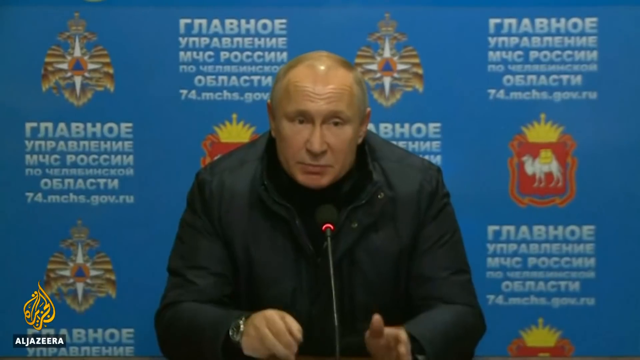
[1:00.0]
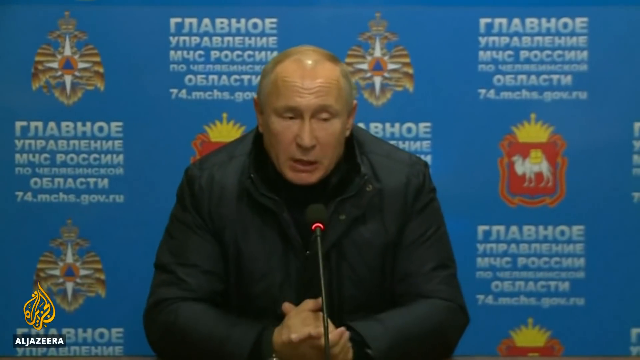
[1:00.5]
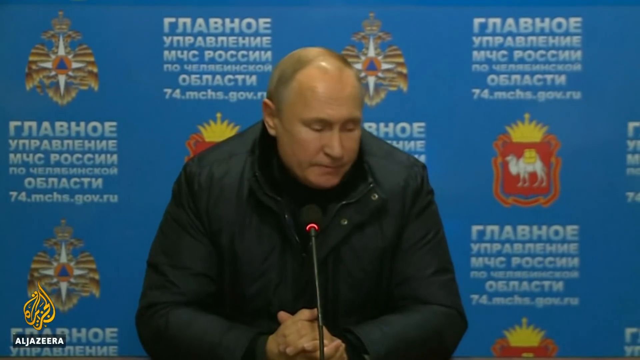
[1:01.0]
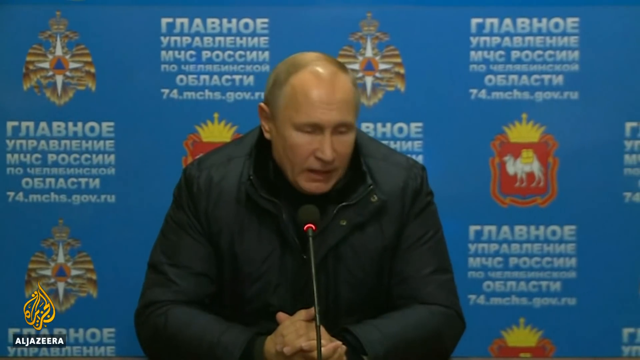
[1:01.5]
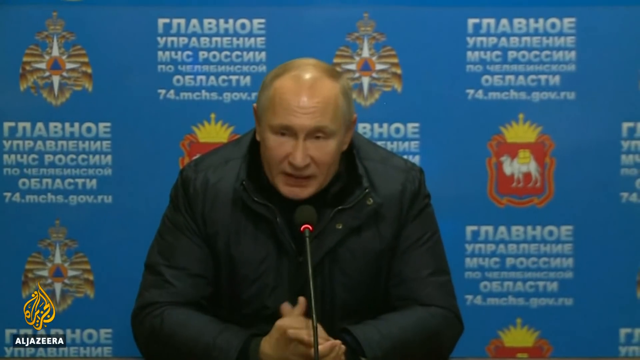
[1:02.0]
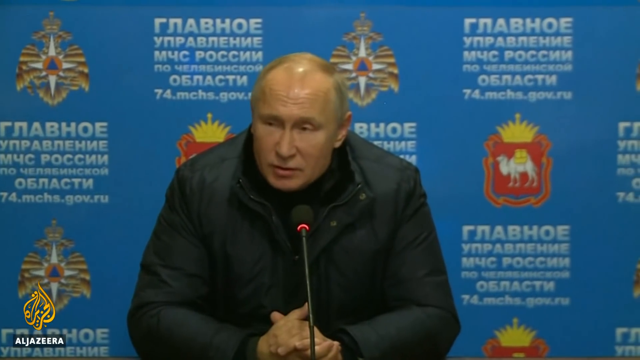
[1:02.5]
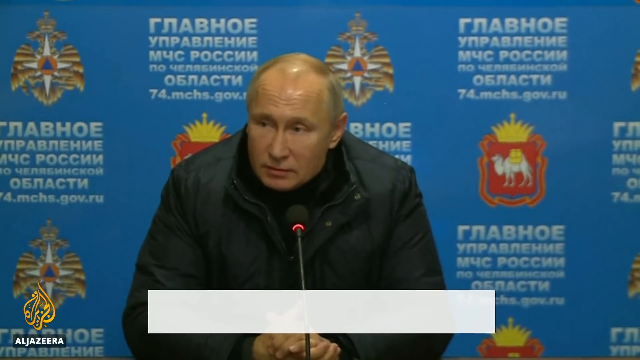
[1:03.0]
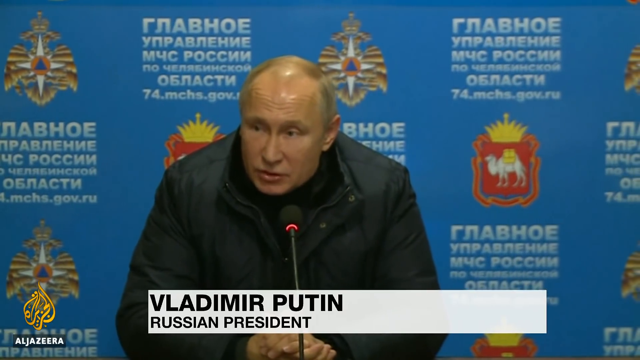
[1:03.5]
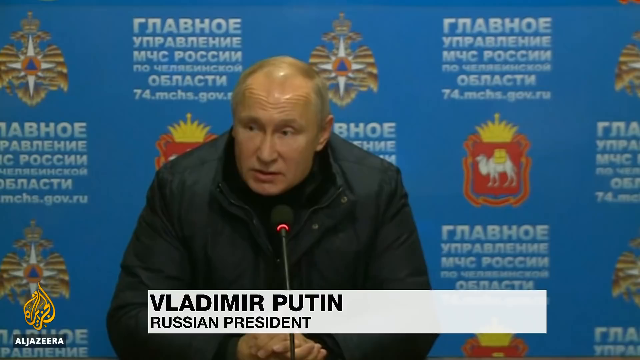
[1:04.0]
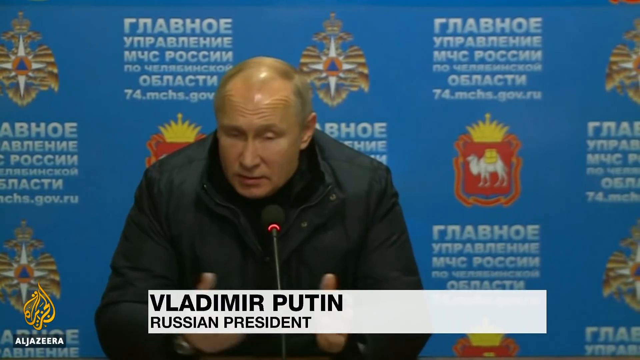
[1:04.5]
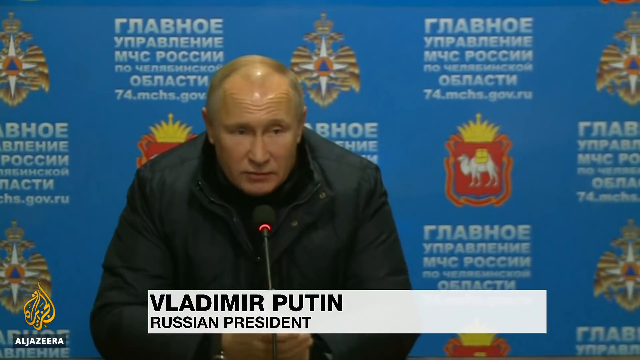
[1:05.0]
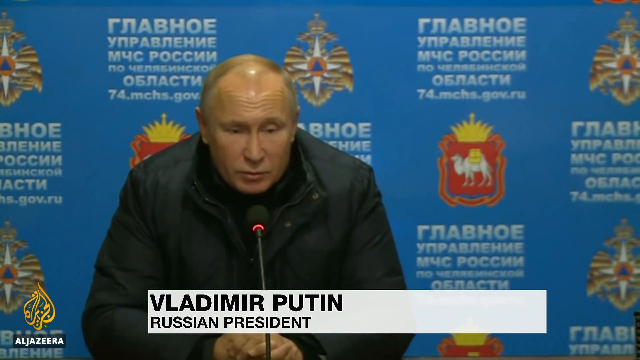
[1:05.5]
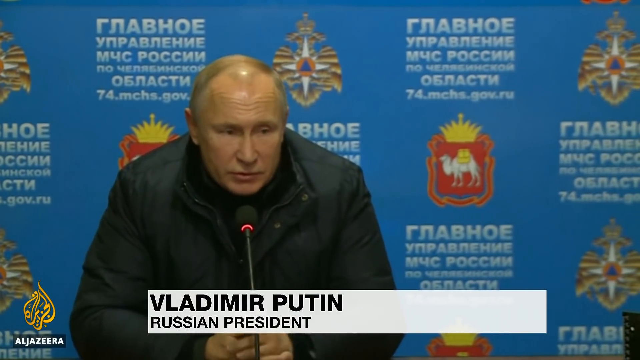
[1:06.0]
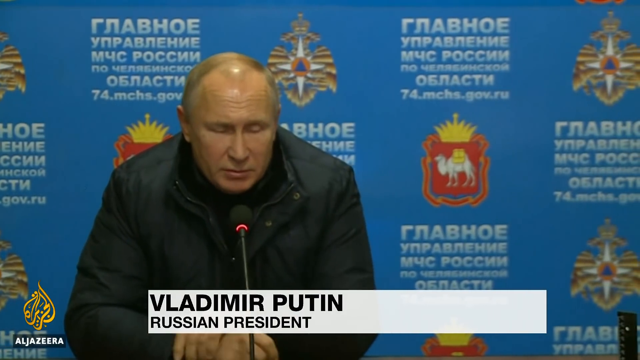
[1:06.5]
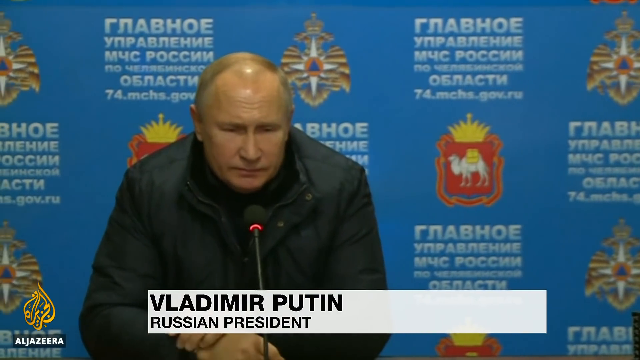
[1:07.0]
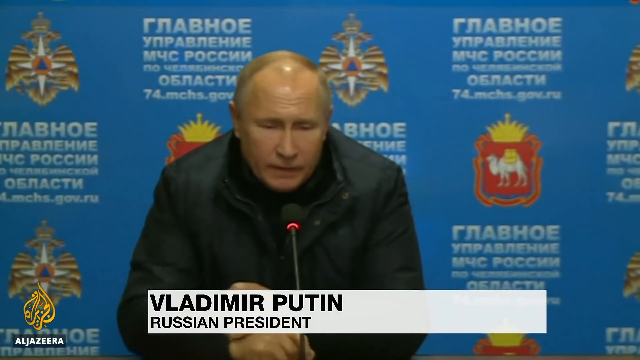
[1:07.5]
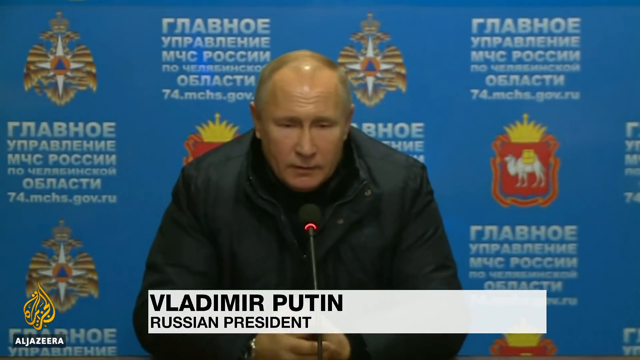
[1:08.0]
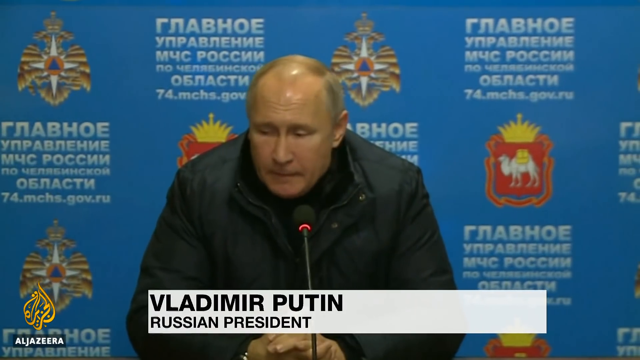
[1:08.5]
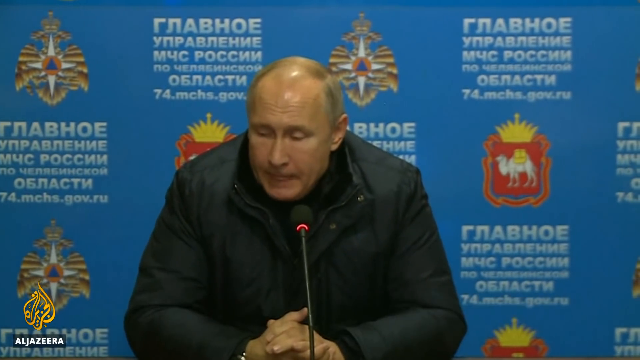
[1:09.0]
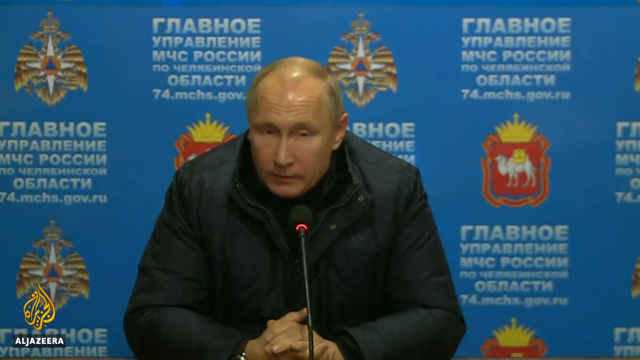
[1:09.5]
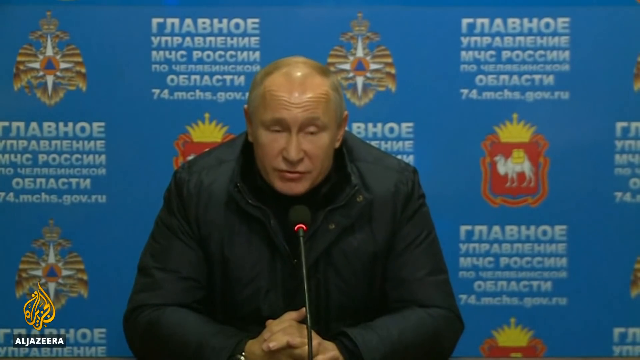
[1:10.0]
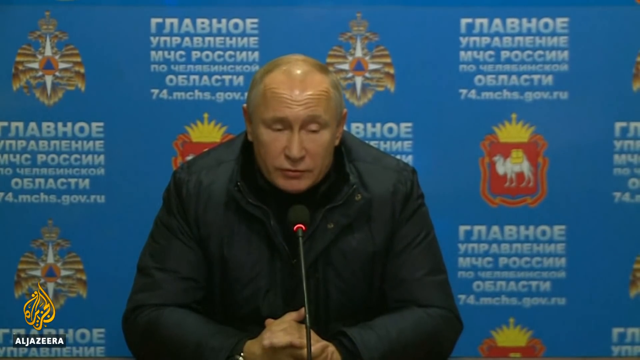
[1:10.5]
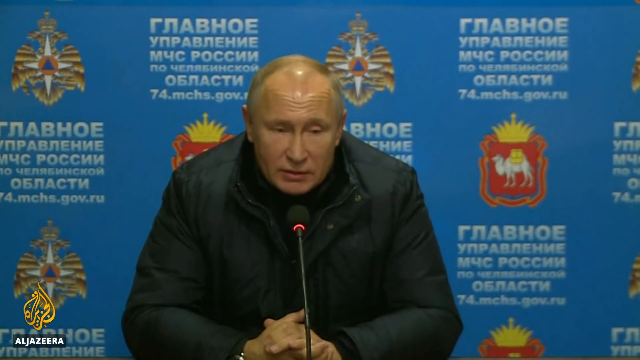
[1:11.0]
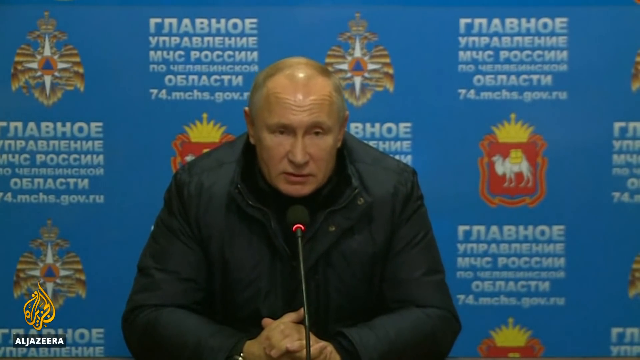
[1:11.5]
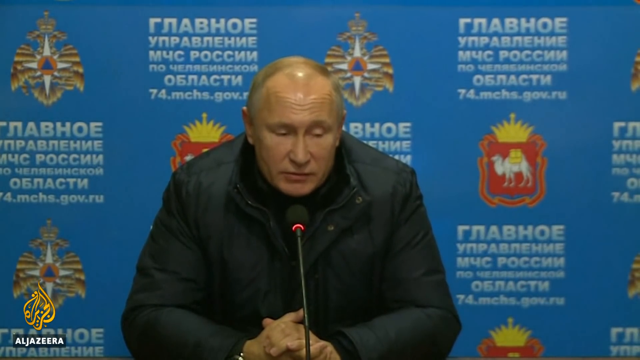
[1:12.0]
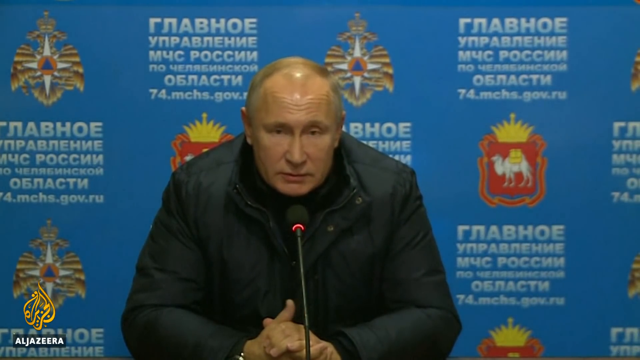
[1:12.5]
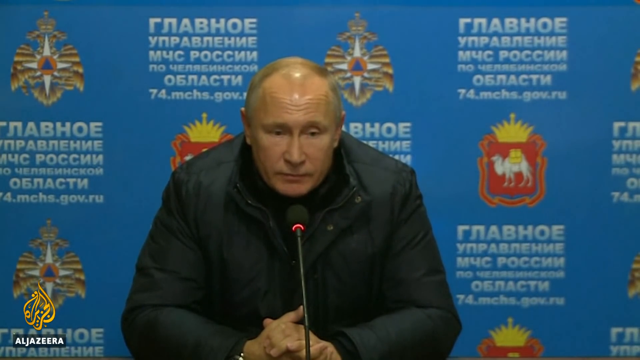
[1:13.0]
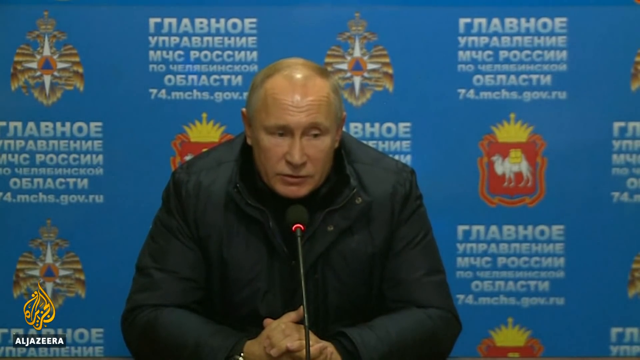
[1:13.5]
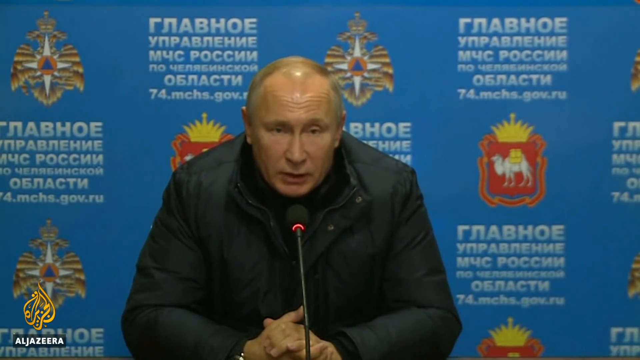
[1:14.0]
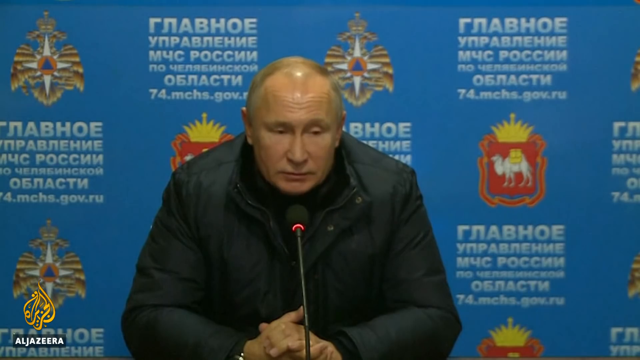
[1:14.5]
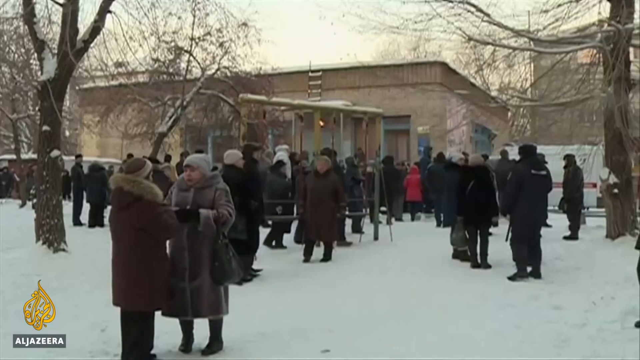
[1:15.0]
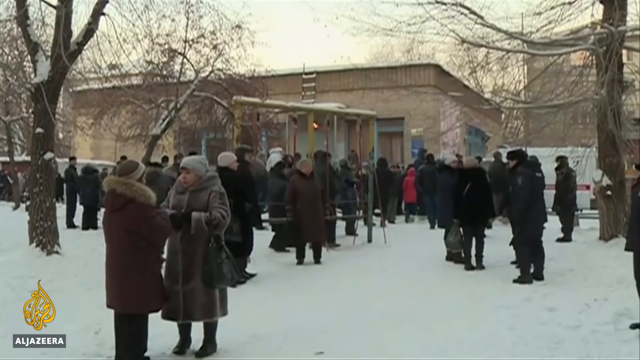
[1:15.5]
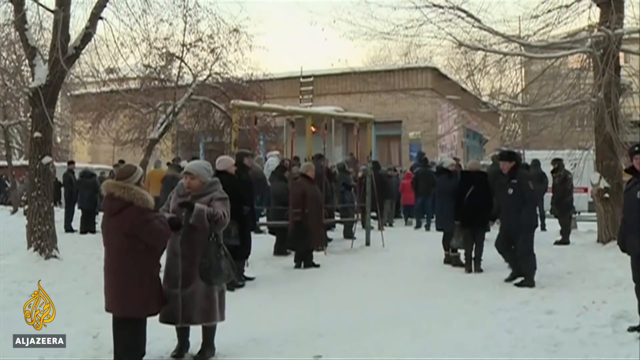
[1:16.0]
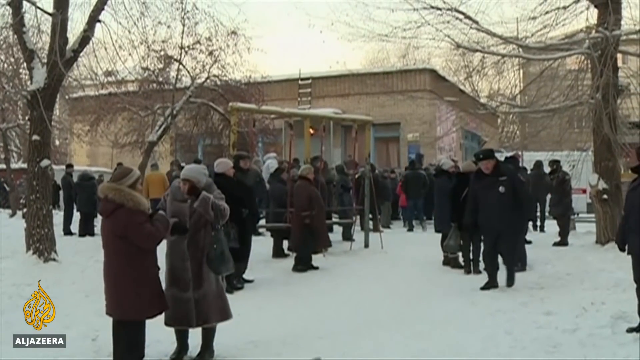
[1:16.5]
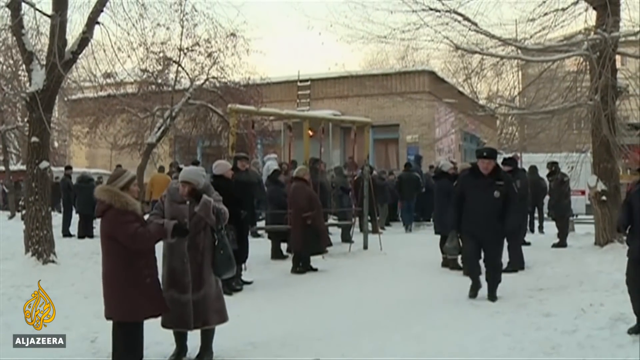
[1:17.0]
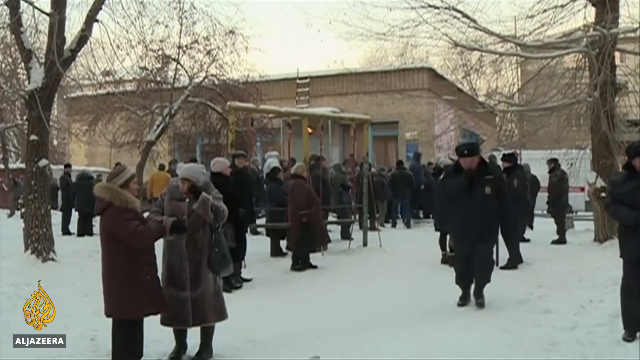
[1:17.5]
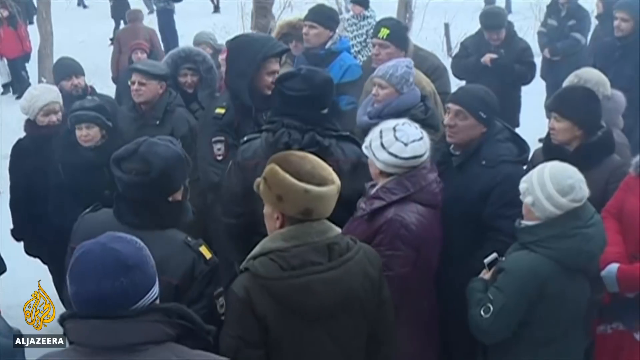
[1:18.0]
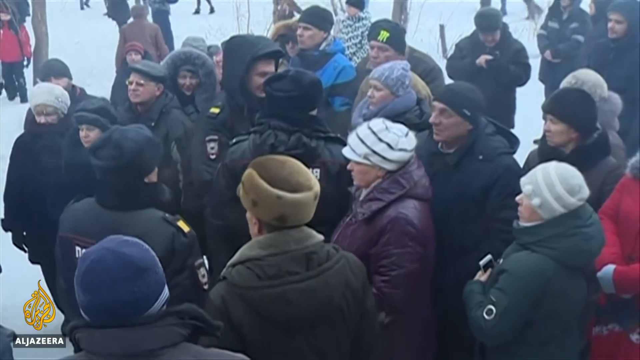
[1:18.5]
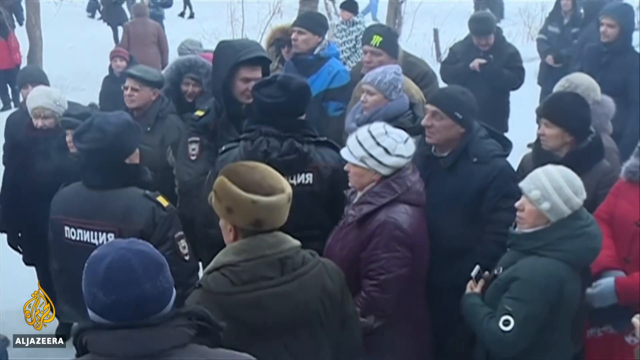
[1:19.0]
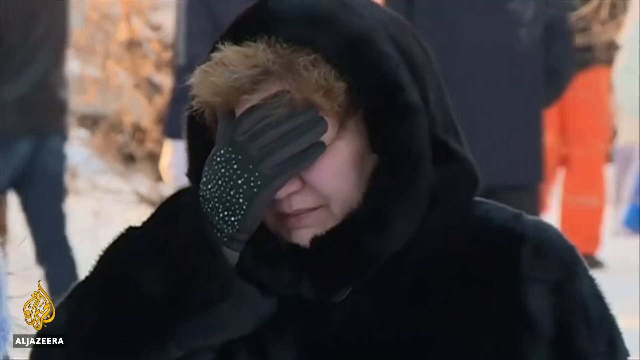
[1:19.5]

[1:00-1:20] Vladimir Putin, the Russian president, is shown seemingly giving a briefing in a certain place. Then a scene shows many people gathered in one place, possibly survivors of the gas explosion.